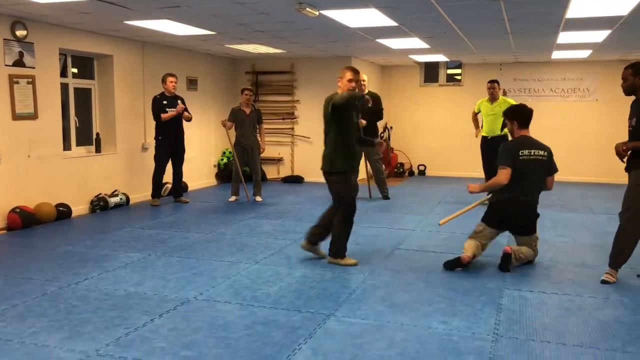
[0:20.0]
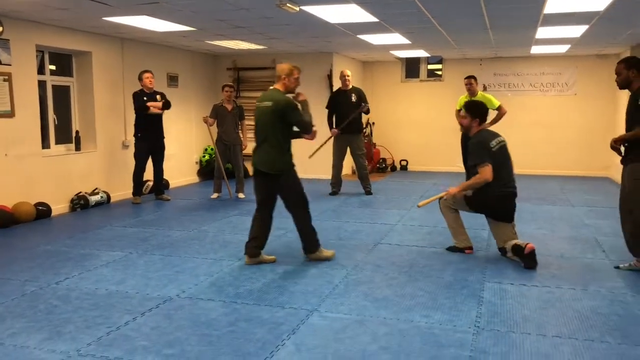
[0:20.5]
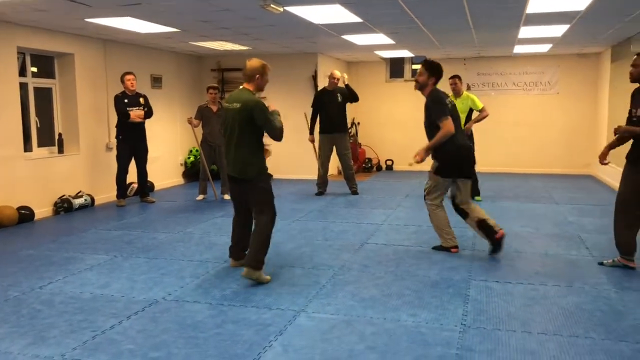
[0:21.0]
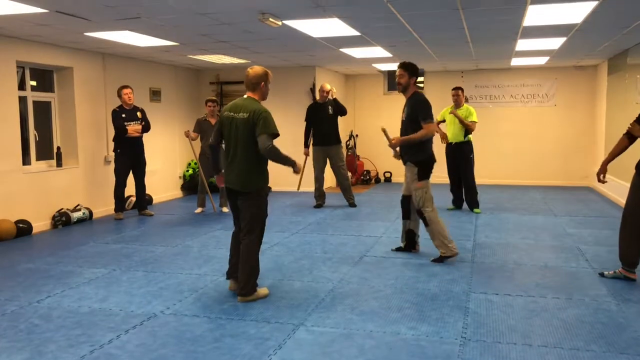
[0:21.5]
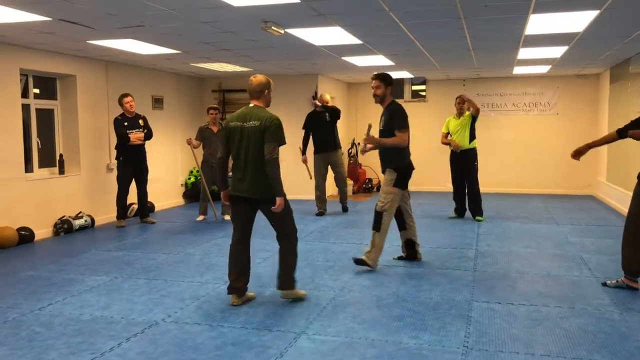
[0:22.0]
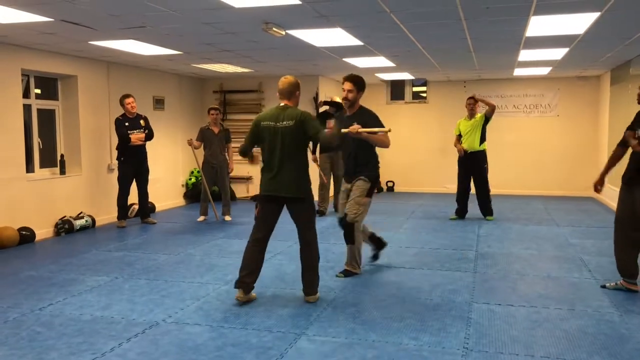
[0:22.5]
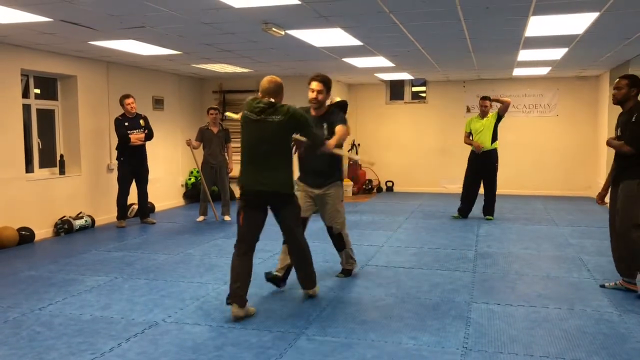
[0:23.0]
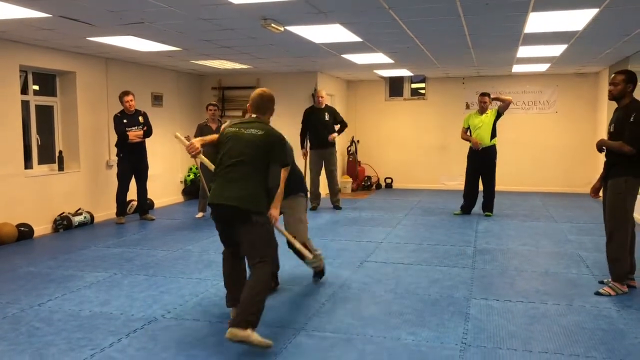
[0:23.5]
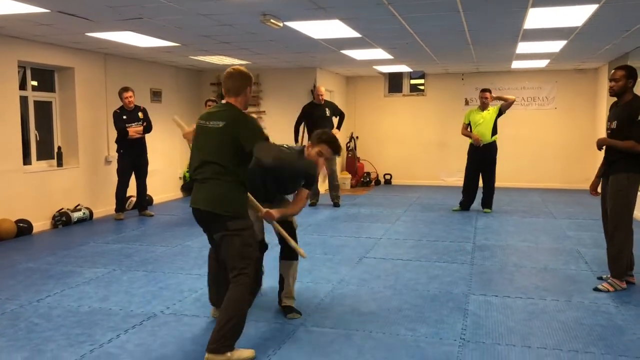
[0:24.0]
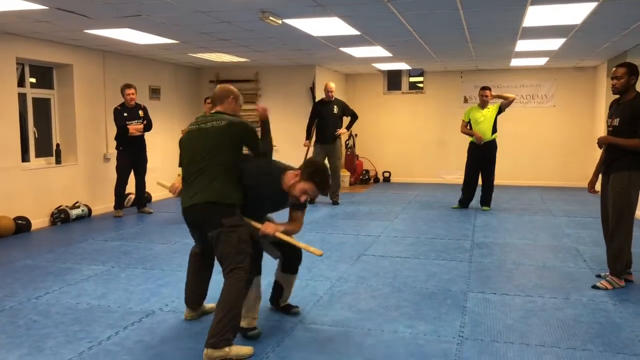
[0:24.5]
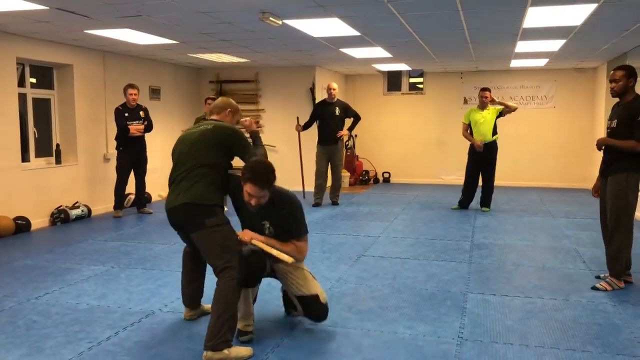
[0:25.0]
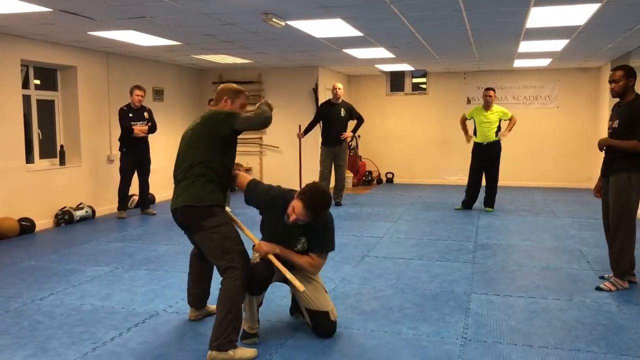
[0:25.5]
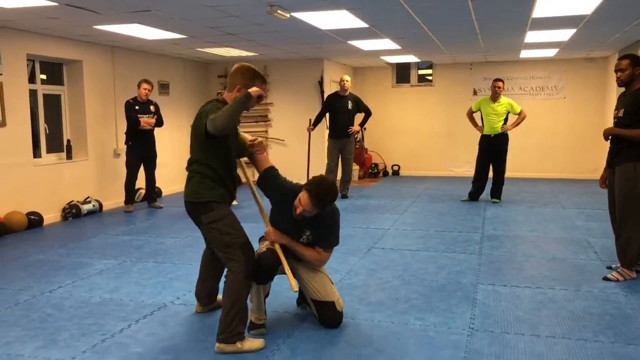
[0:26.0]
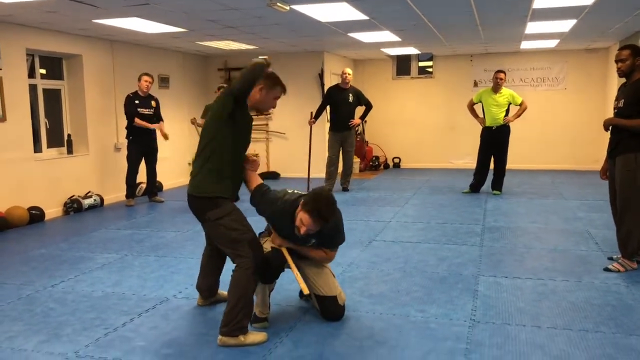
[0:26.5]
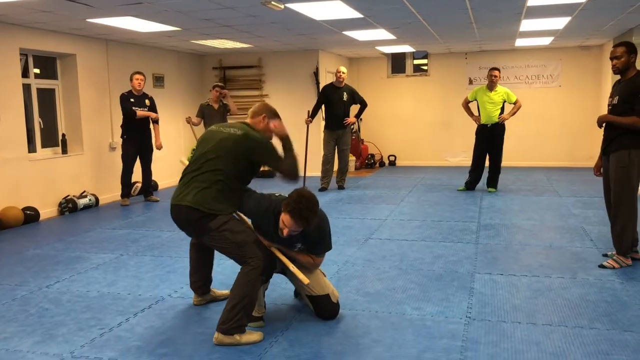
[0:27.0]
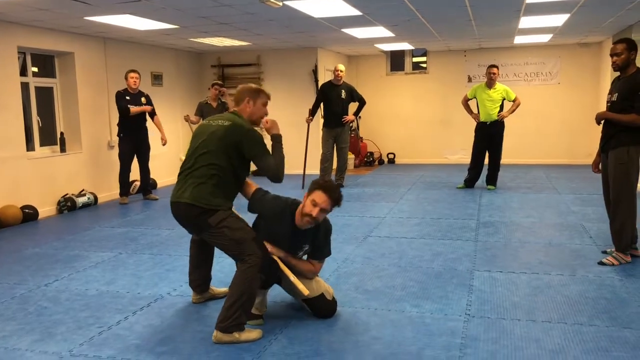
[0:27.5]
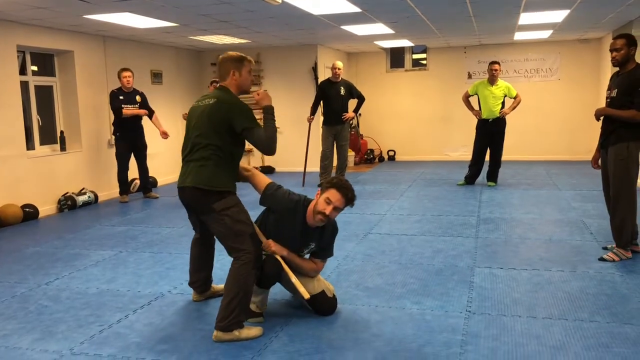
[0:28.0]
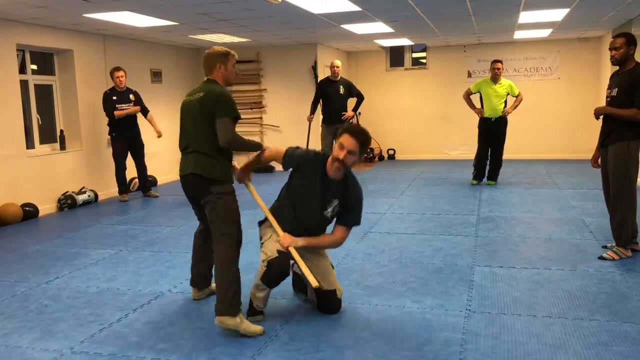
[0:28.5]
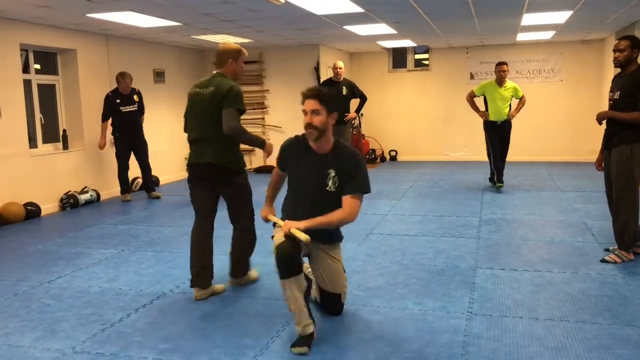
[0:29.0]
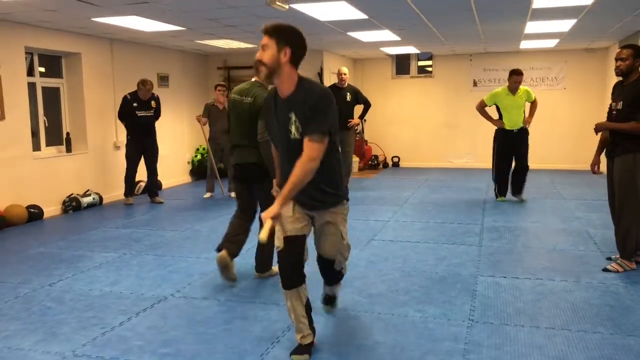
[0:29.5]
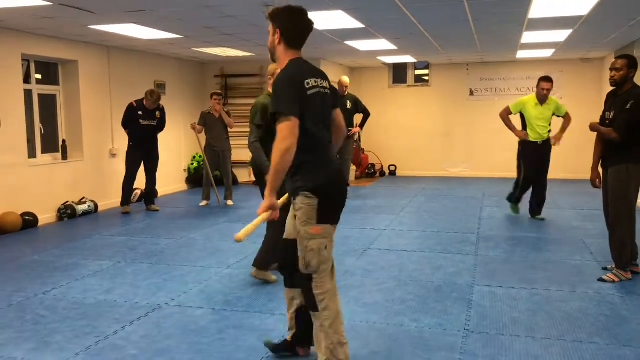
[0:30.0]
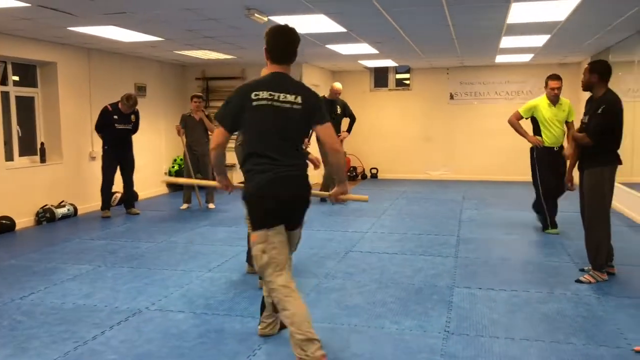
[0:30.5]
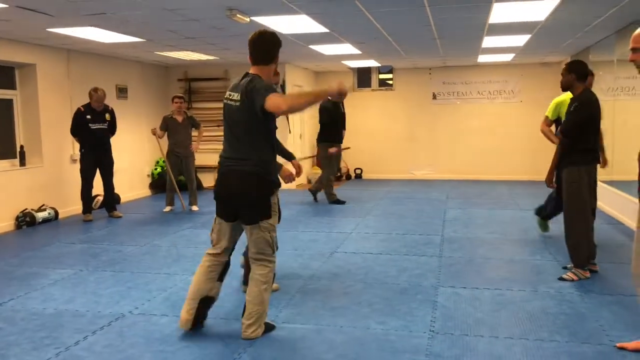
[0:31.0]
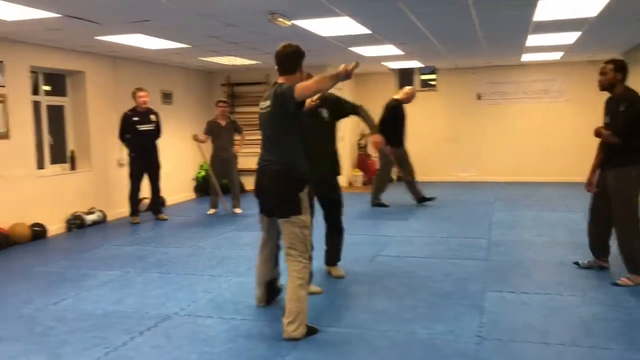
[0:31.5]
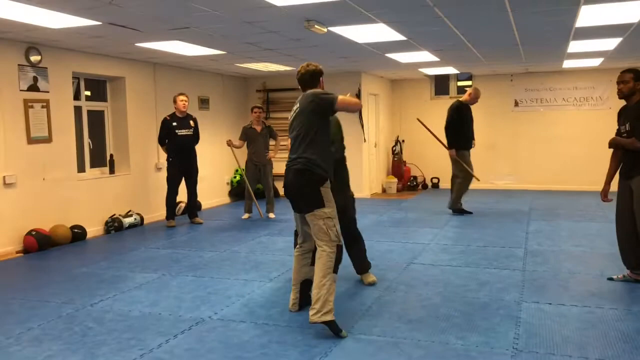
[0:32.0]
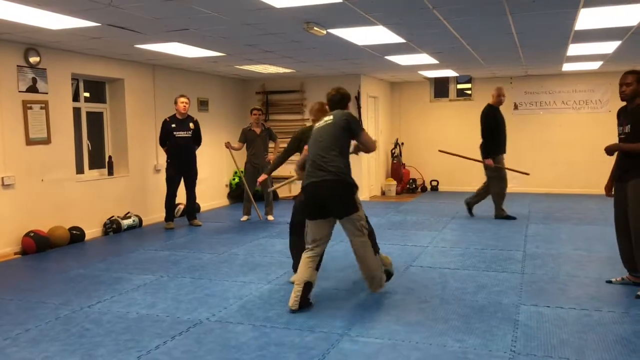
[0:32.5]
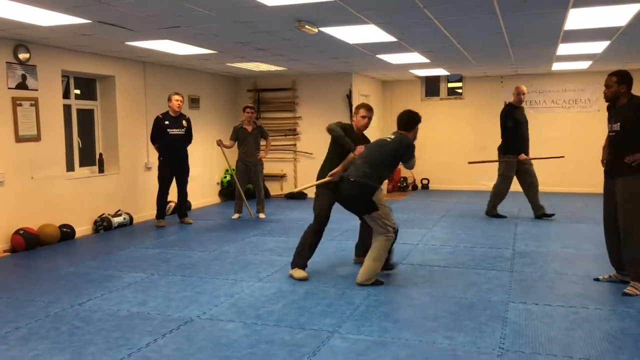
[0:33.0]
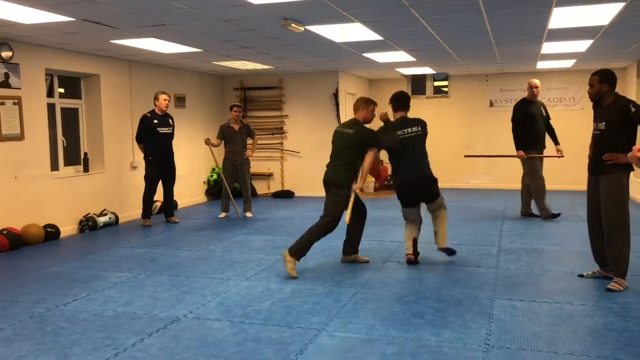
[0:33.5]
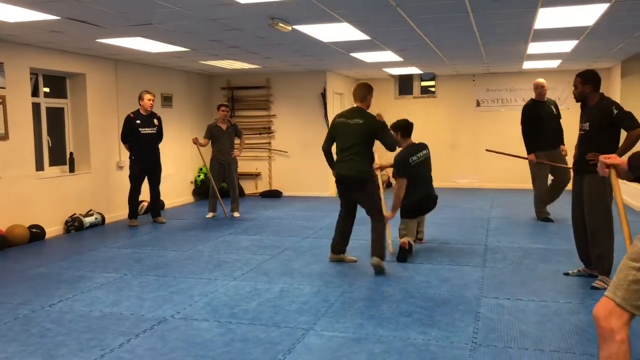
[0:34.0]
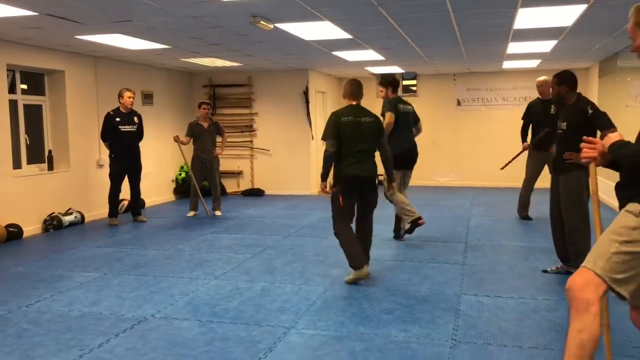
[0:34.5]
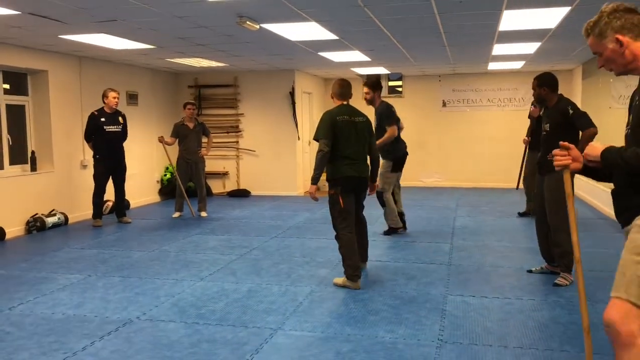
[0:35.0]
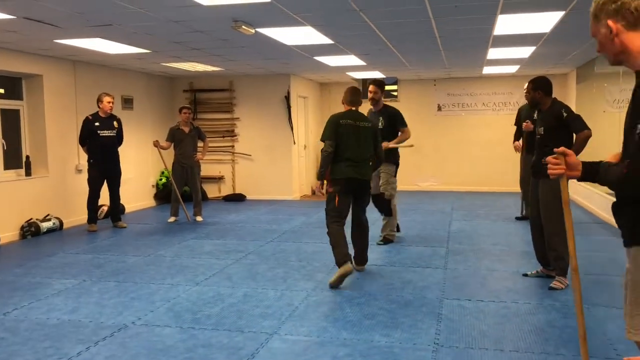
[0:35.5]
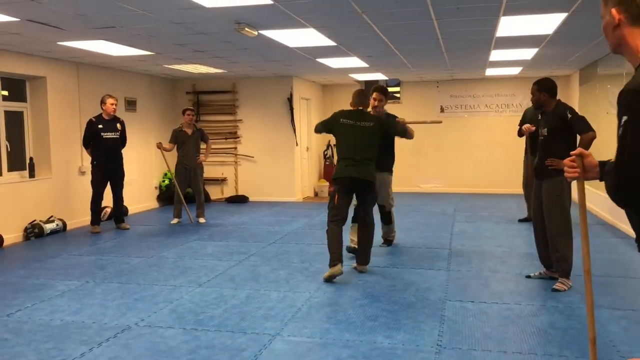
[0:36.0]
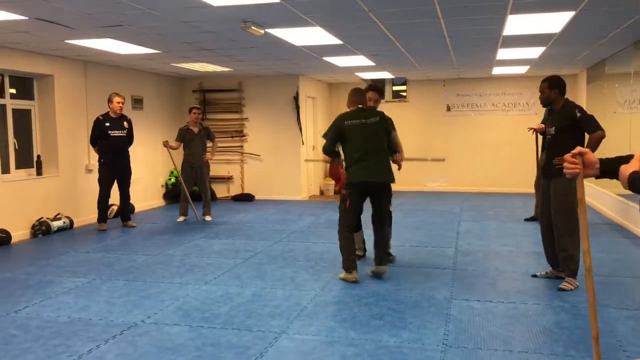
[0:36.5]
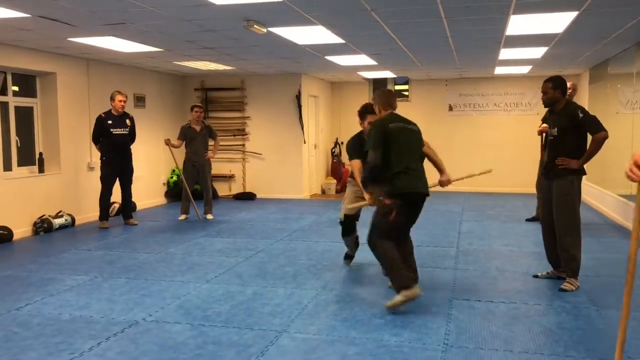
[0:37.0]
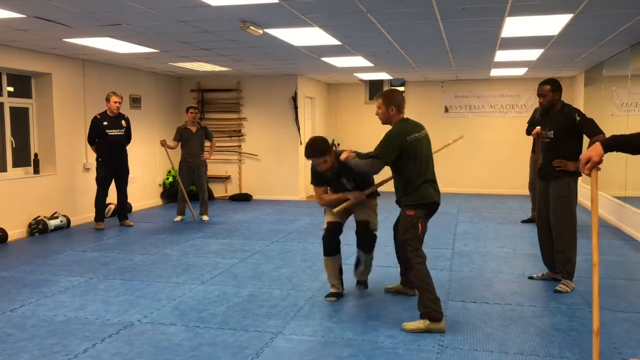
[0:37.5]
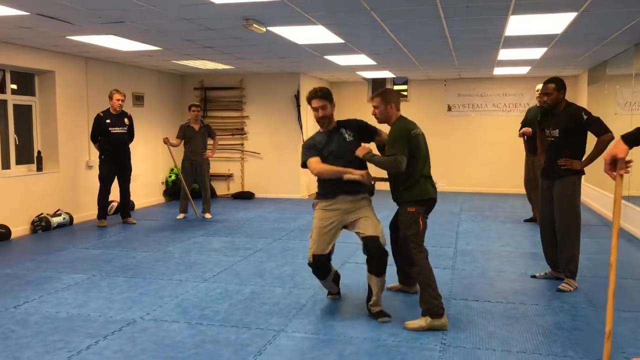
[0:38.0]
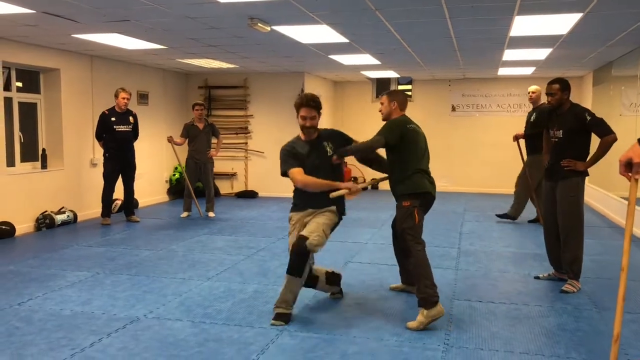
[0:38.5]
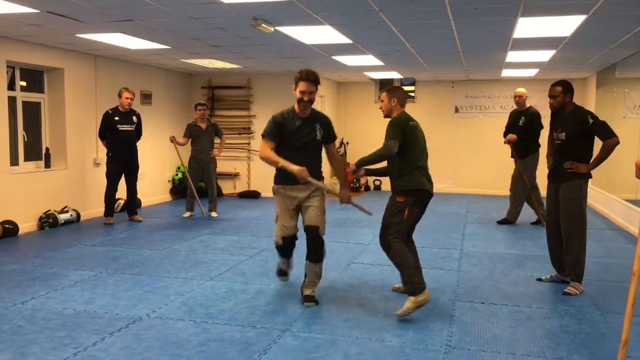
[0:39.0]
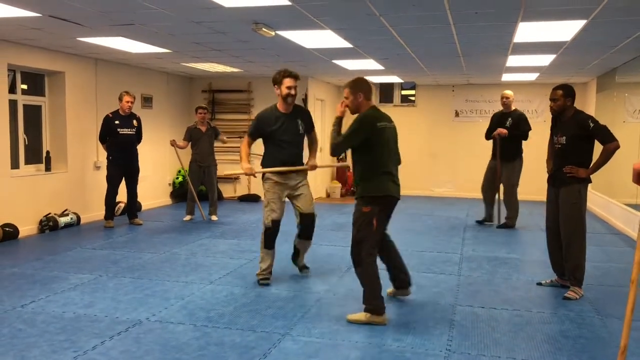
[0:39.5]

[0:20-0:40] The instructor of the martial arts class touches his right elbow with his left hand while the student in front of him kneels on the mat, holding the brown stick in his hand and looking up at the instructor. The student then stands facing the instructor, and the instructor turns to face away from the camera, seeming to instruct the student further. The instructor grabs, or at least attempts to grab, the brown stick from the student, and the student leaps forward to hold on to it. The instructor lets go of the stick with his right hand, the student bends forward, and the instructor raises his right arm in a downward elbow motion, elbowing the student on the upper back. The student crouches down, still holding the brown stick.